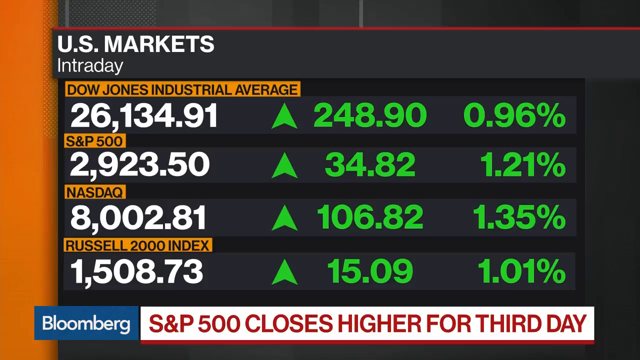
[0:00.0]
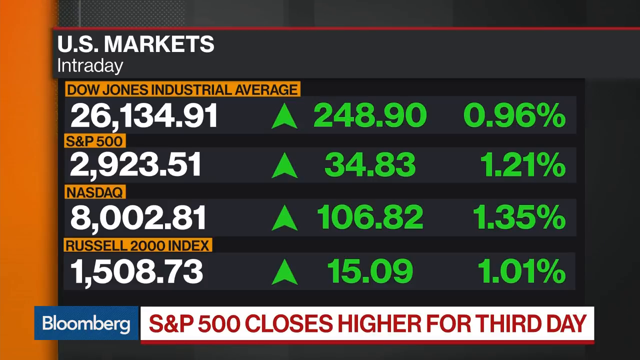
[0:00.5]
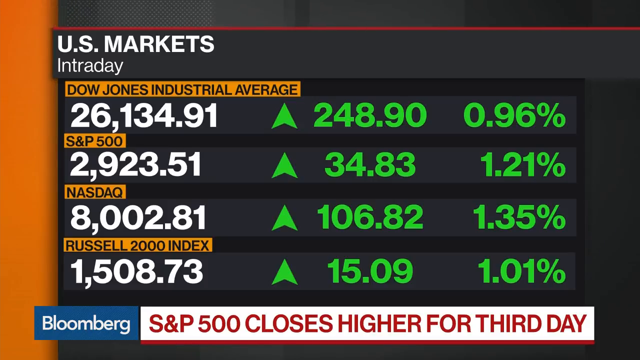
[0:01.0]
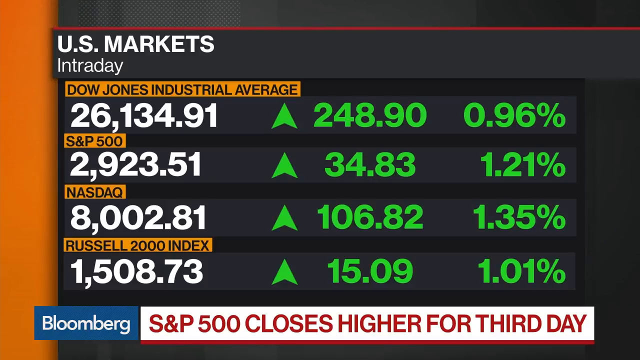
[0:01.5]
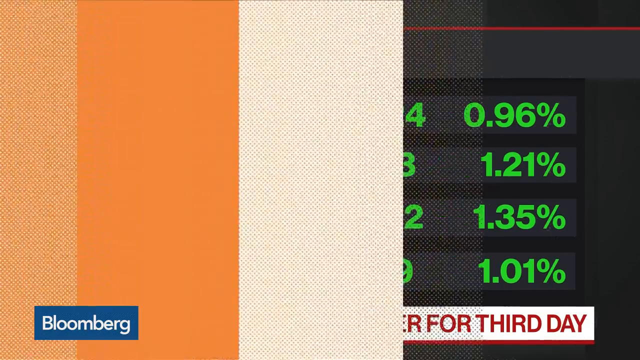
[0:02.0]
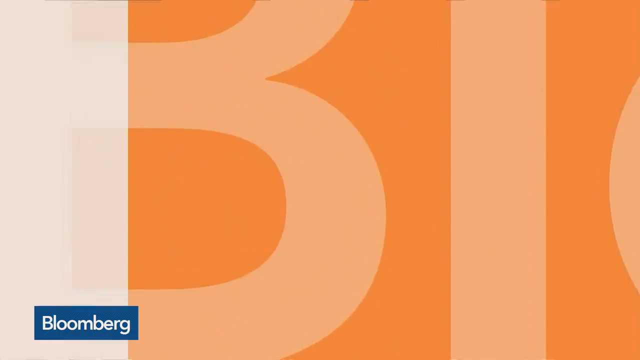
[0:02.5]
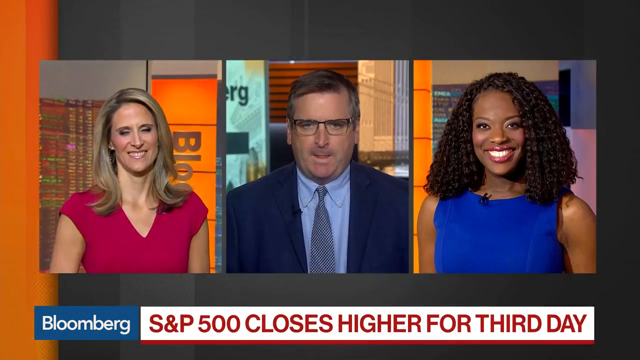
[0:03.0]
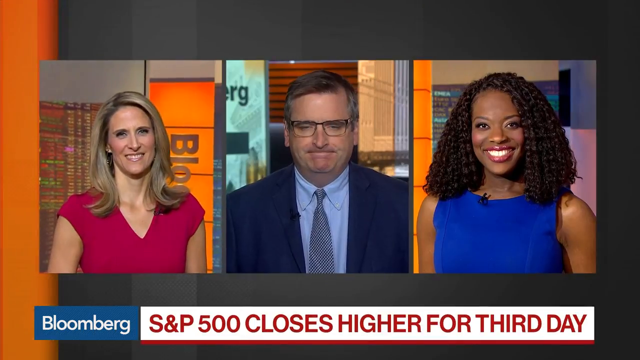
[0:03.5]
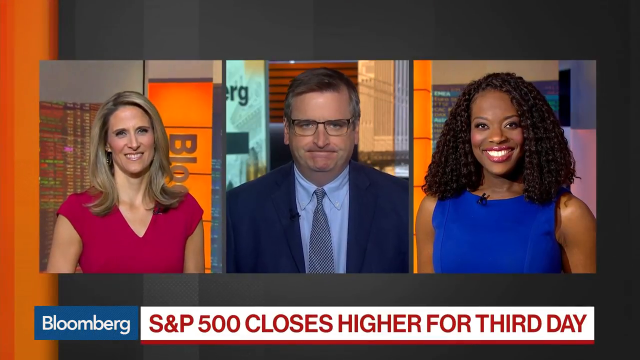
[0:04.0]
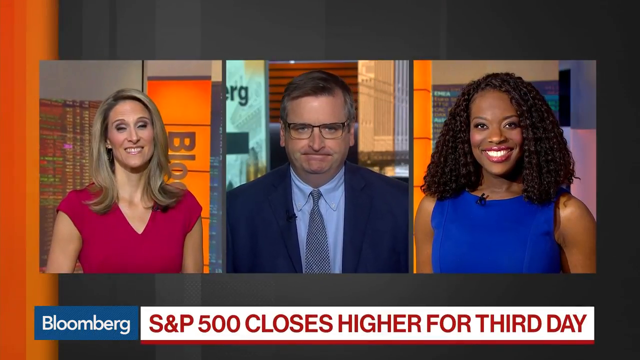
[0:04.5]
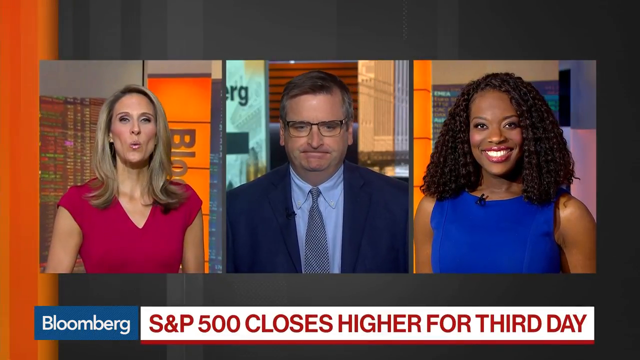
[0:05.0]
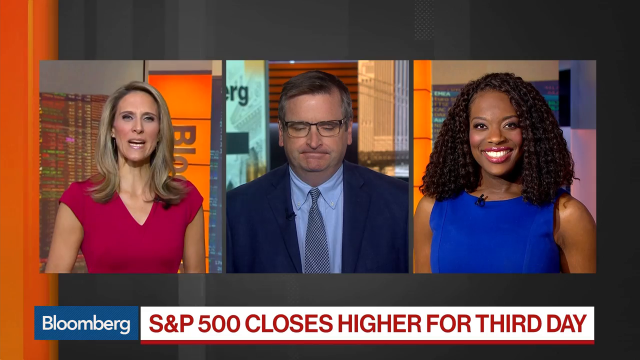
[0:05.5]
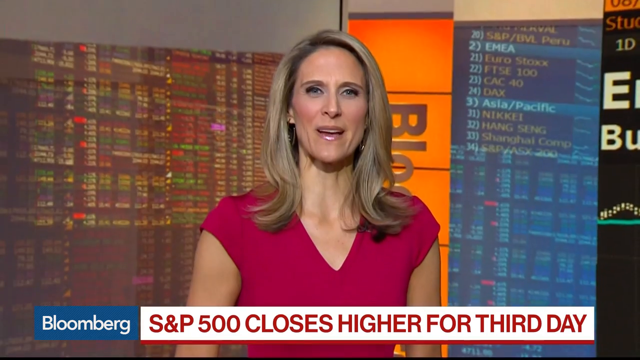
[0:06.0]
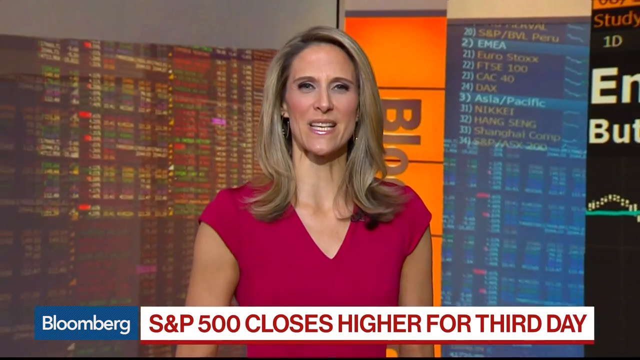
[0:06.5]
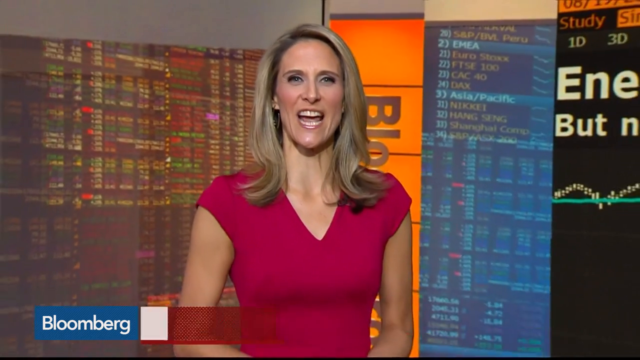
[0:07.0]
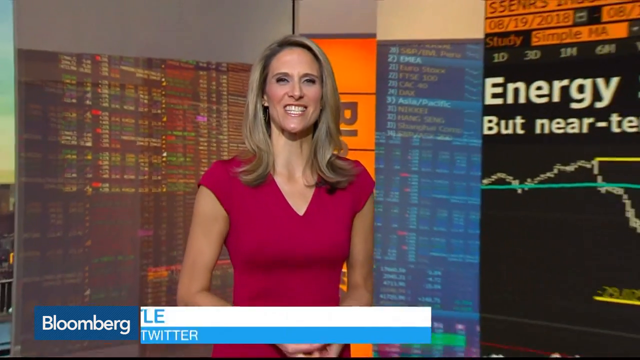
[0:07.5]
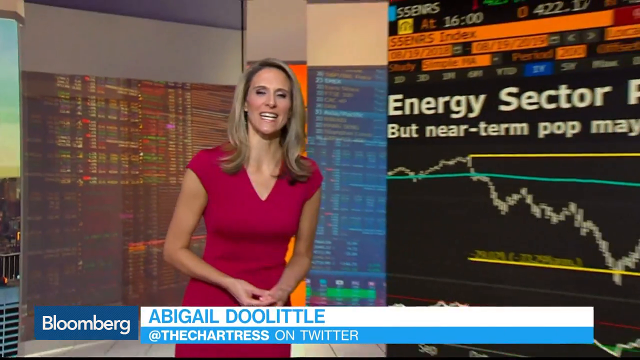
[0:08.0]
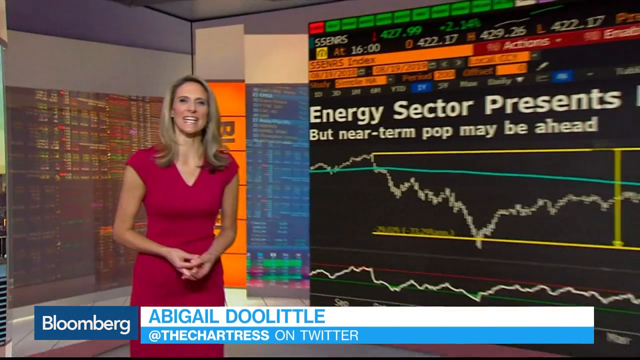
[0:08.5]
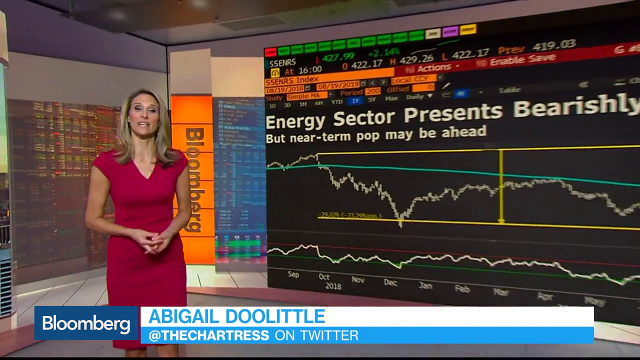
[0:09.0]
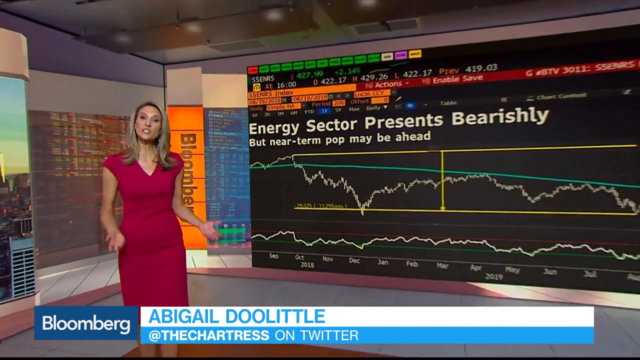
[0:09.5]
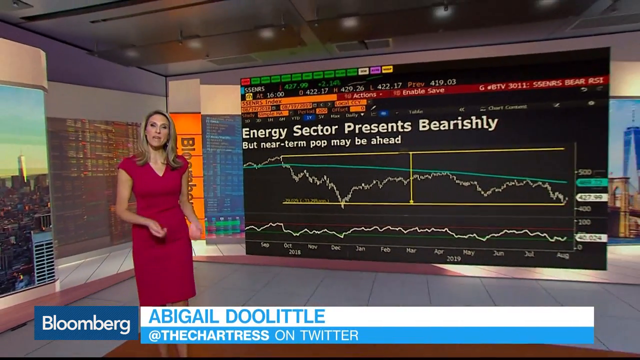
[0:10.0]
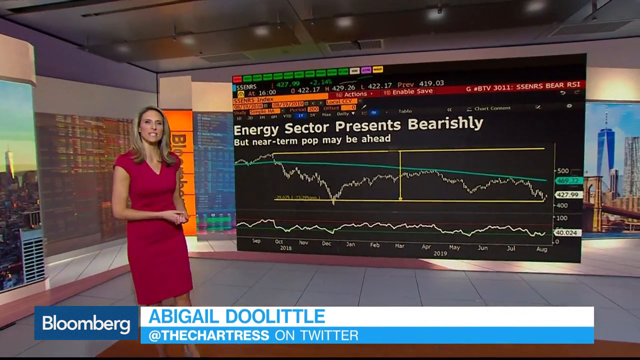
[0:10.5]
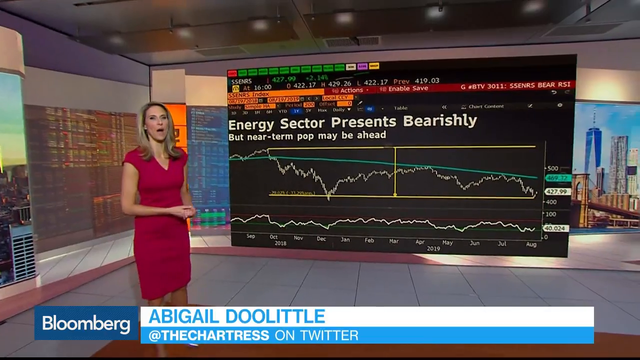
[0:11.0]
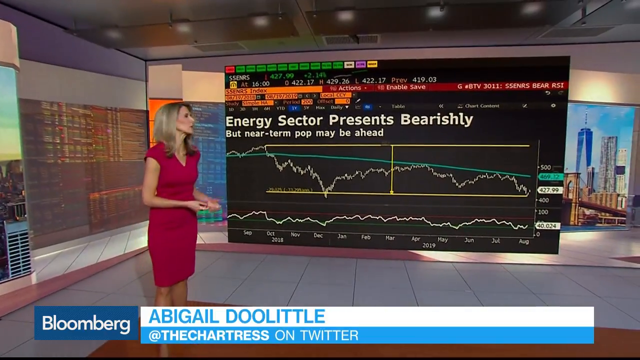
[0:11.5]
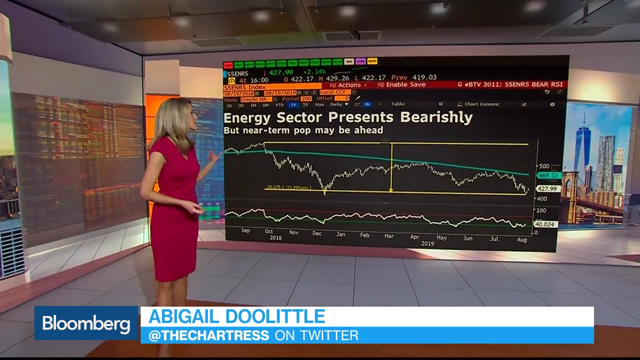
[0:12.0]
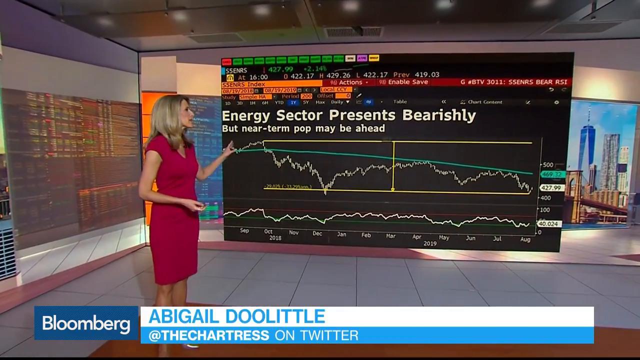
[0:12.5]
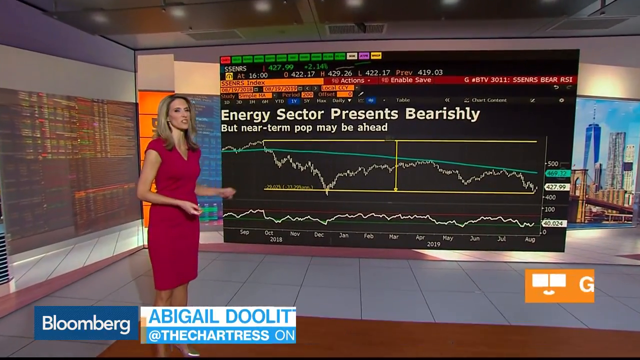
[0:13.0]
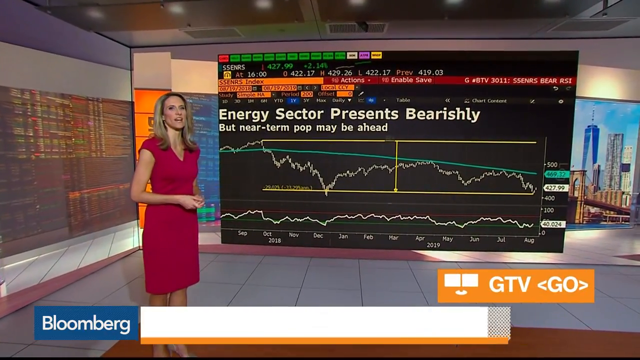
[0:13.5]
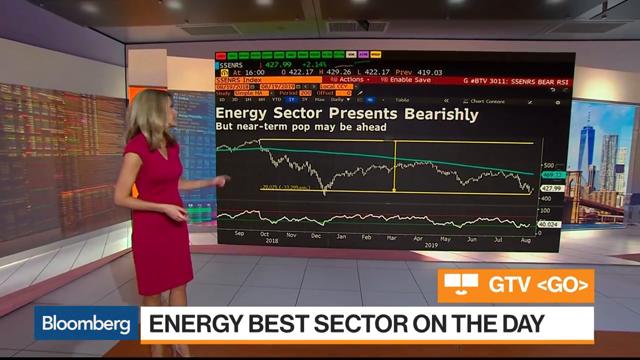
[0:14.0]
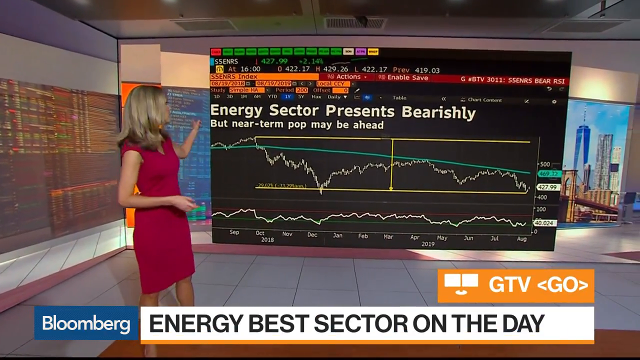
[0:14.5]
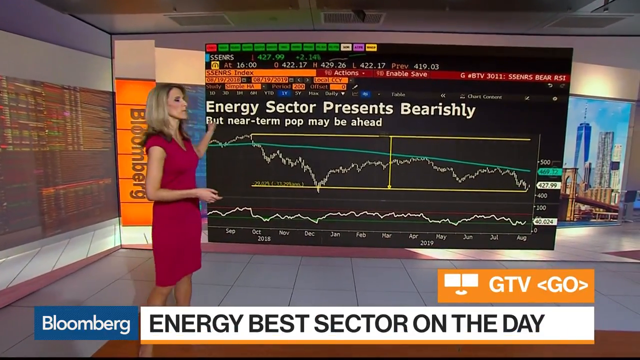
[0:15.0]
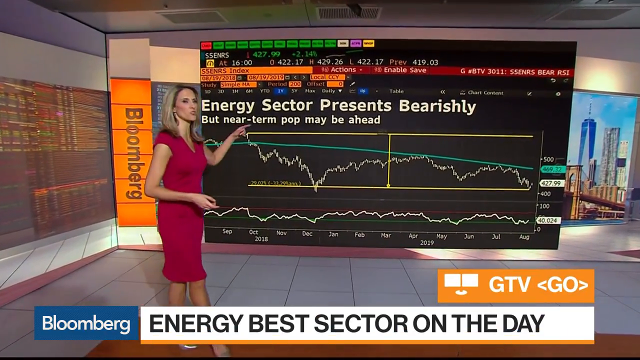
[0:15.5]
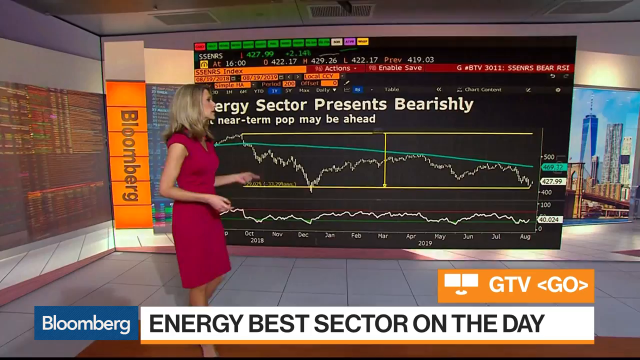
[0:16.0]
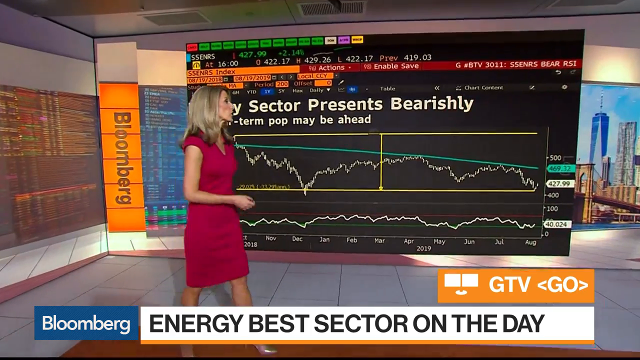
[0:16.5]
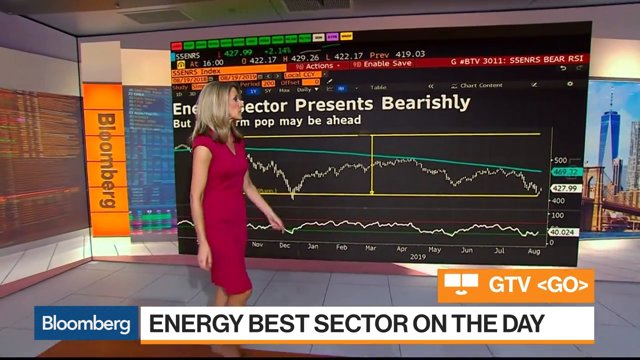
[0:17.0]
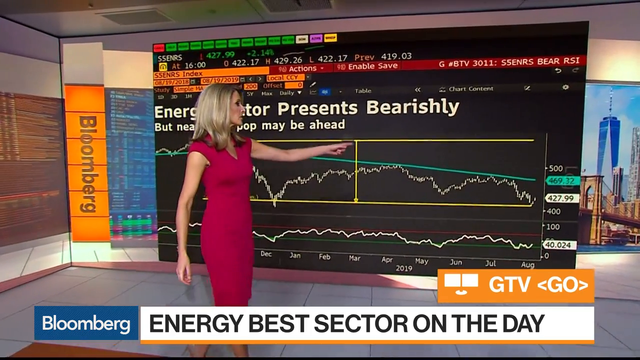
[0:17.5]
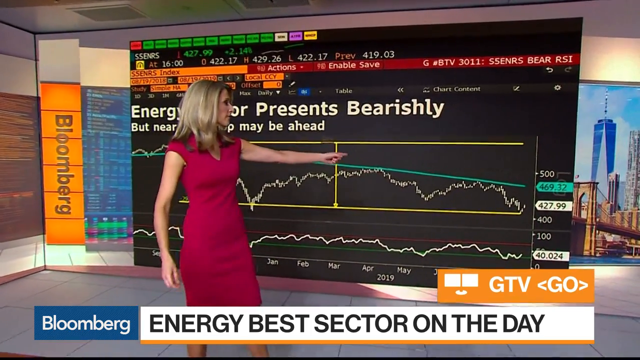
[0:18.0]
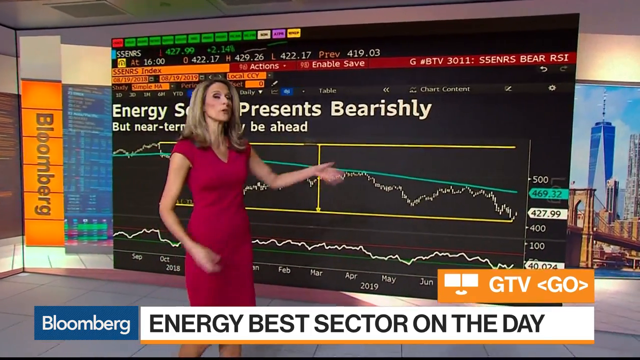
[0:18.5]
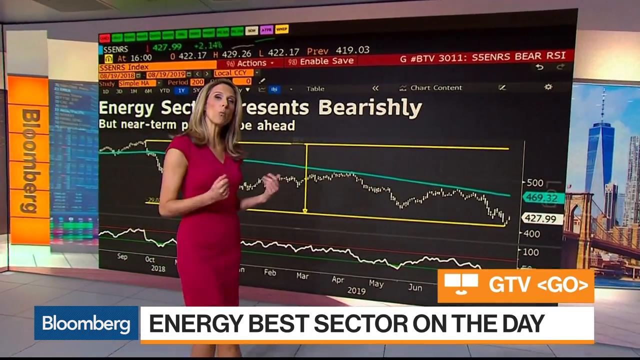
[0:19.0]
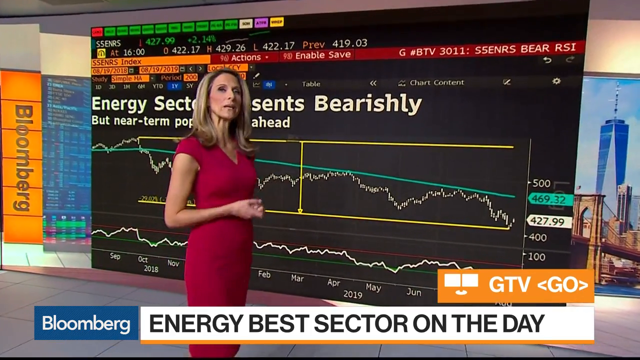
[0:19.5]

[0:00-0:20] A graphic on the Bloomberg channel shows S&P 500 closes. At the bottom left, a blue ribbon with white text reads "Bloomberg," and in the center a white banner with red text reads "S&P 500 closes higher for the third day." White text at the top center reads "U.S. markets." The first entry, in black lettering on an orange banner, is "Dow Jones Industrial Average," with "26,134.91" in white underneath and, in green with an upward arrow, "248.90" and "0.96%." Below it an orange banner in black lettering reads "S&P 500," with "23.51" in white and, in green with an upward arrow, "34.83" and "1.21%." Next, an orange banner in black lettering reads "NASDAQ," with "8,002.81" in white underneath and, in green with an upward arrow, "106.82" and "1.35%." Finally, at the bottom, an orange banner in black lettering reads "Russell 2000 Index," with "1,508.73" in white and, in green with an upward arrow, "15.09" and "1.01%." The scene transitions to several panelists on screen: a light-skinned woman with blonde hair on the left, a light-skinned man with brown hair and glasses in a blue suit in the center, and a dark-skinned woman with dark brown hair in a blue dress on the right. The camera then moves to a light-skinned woman in a red dress, with a chart in the background reading "energy sector presents bearishly" in the center of the screen. The graph shows a number of statistics, and the woman walks down the graph, pointing out different points on it.